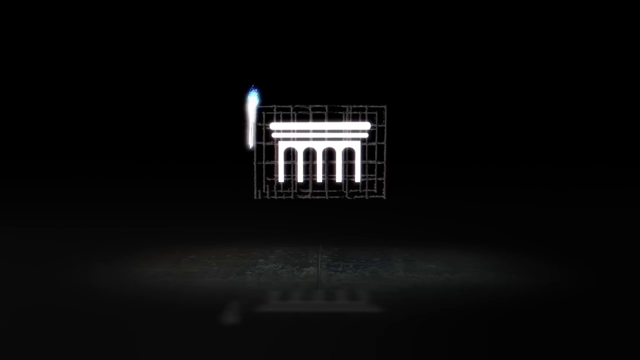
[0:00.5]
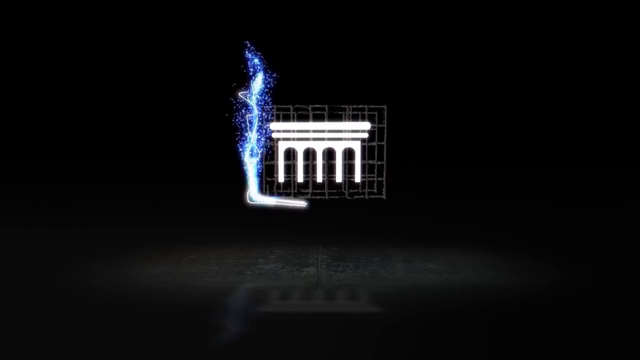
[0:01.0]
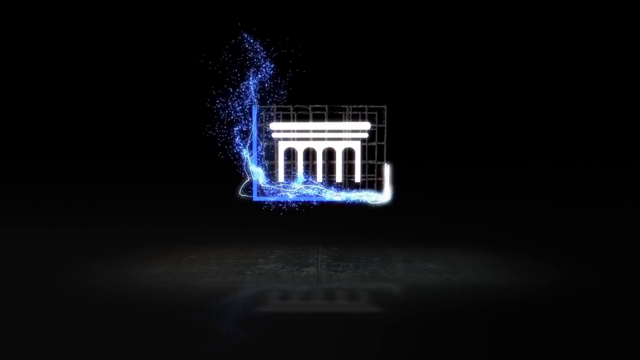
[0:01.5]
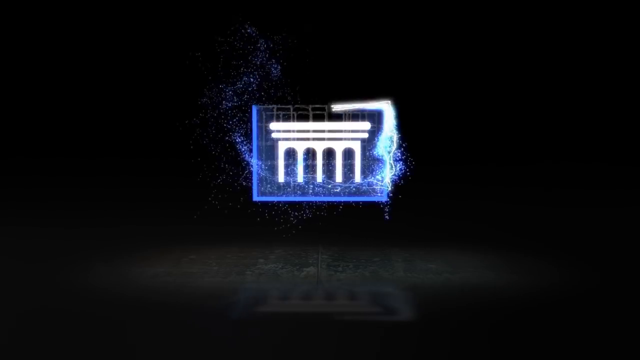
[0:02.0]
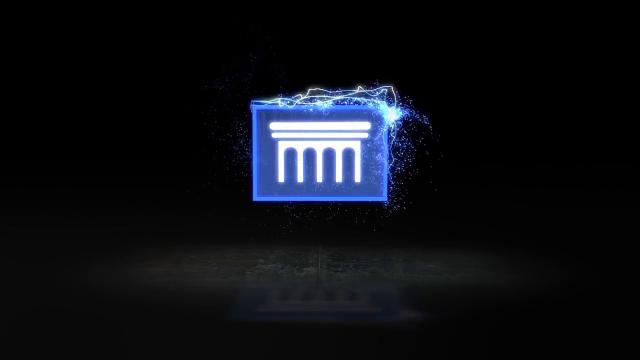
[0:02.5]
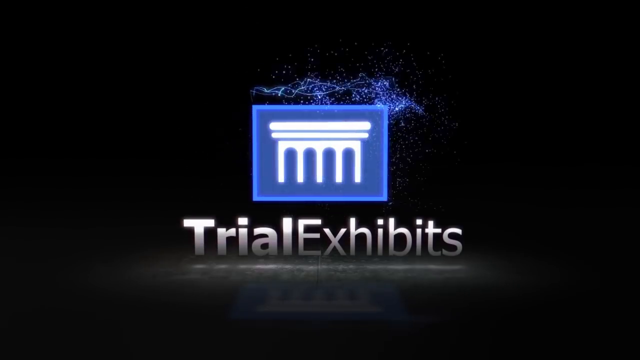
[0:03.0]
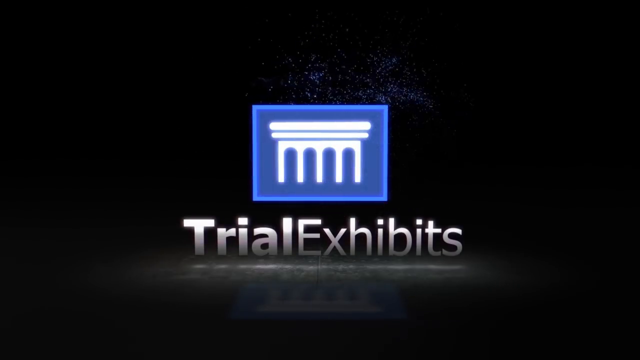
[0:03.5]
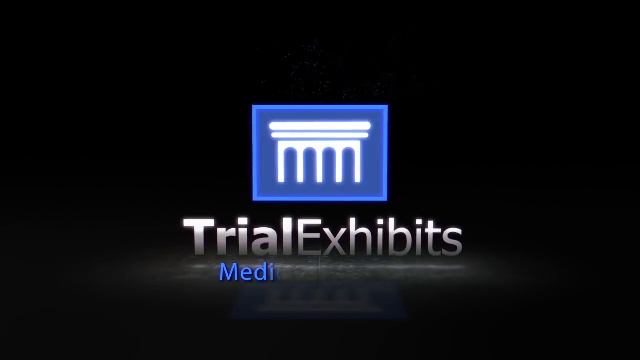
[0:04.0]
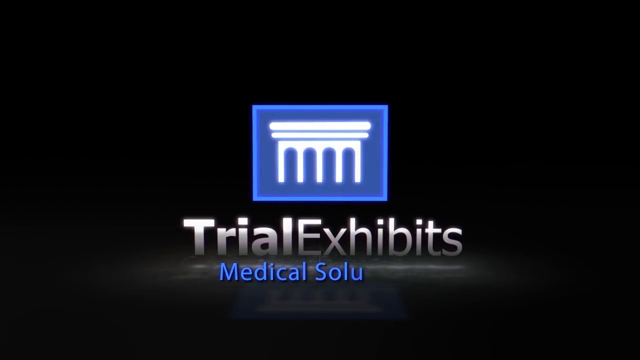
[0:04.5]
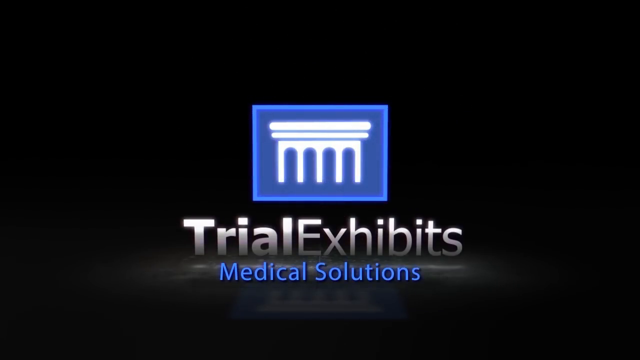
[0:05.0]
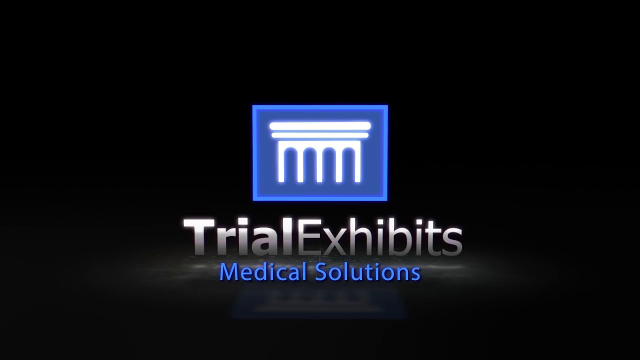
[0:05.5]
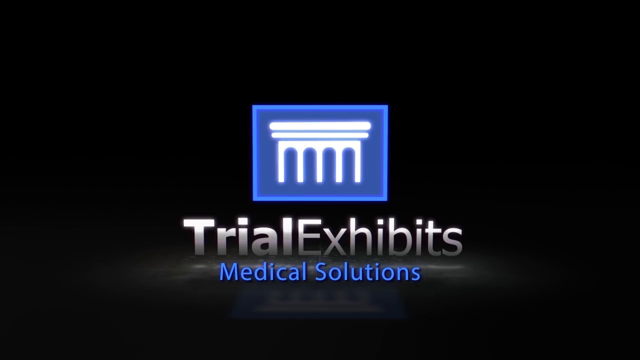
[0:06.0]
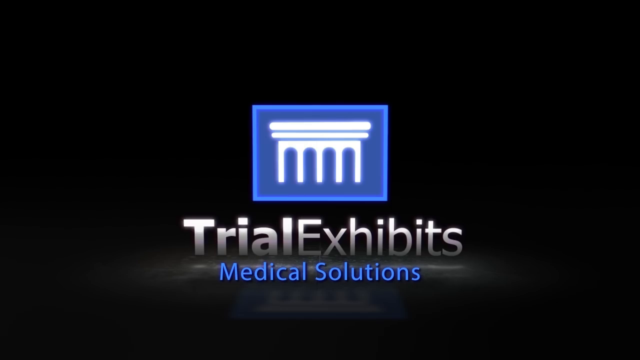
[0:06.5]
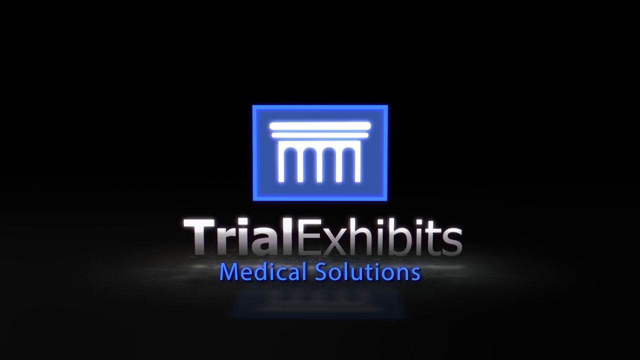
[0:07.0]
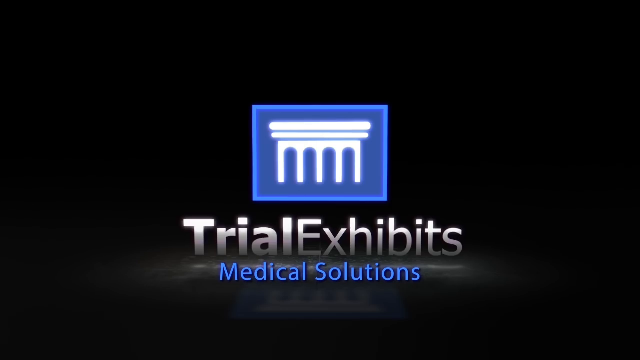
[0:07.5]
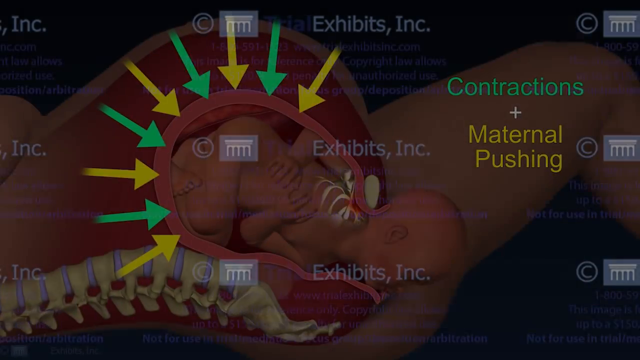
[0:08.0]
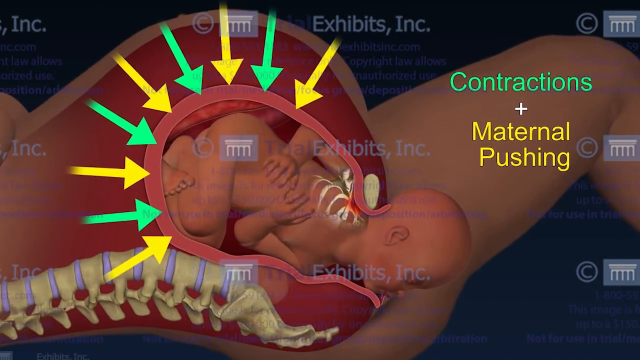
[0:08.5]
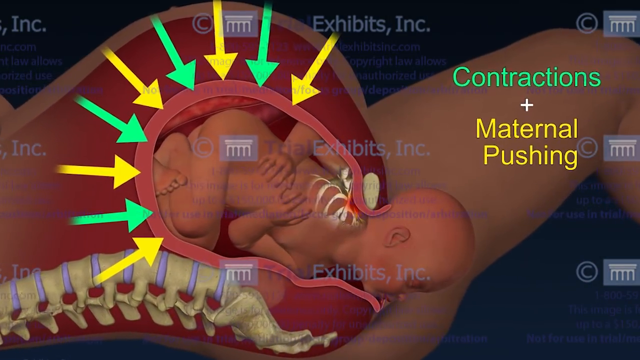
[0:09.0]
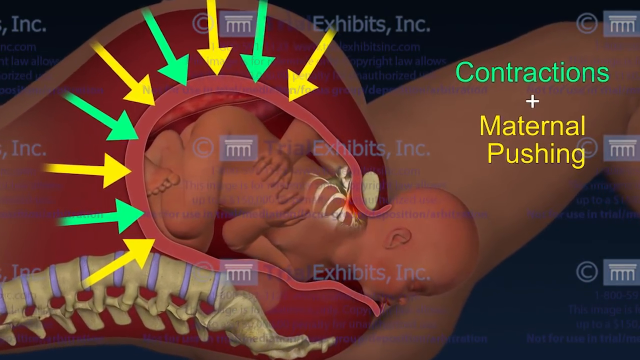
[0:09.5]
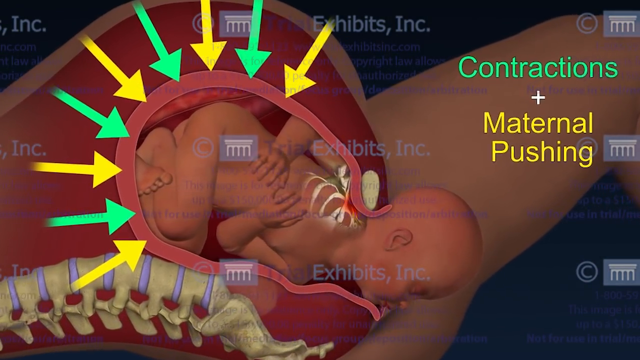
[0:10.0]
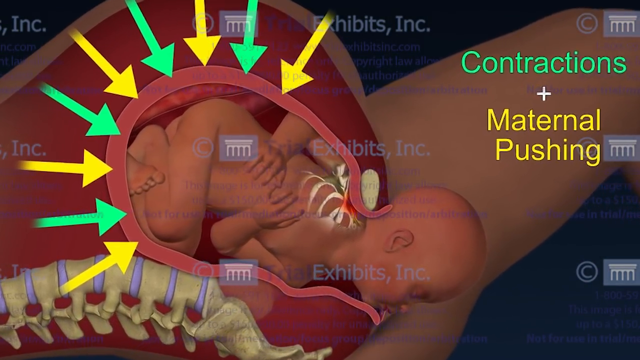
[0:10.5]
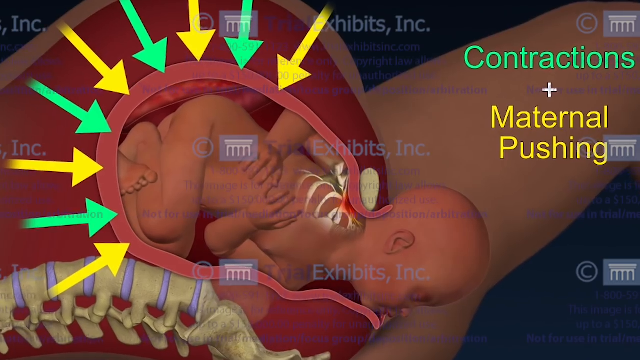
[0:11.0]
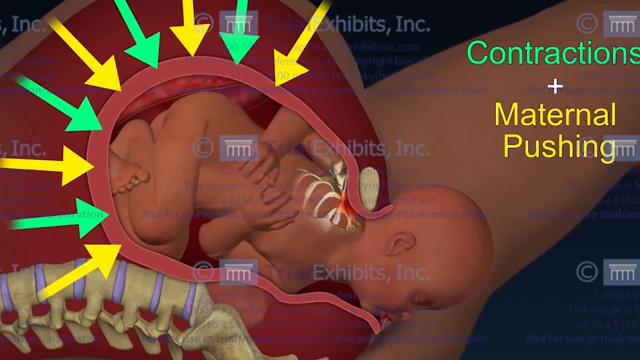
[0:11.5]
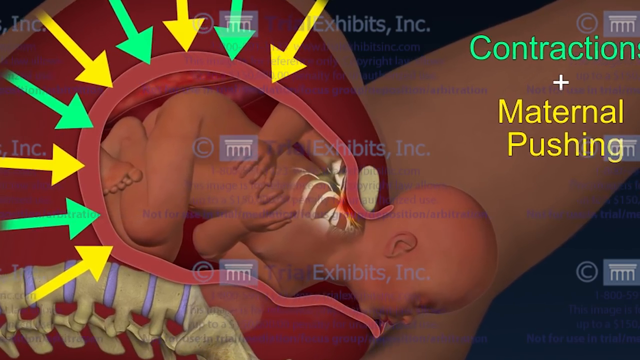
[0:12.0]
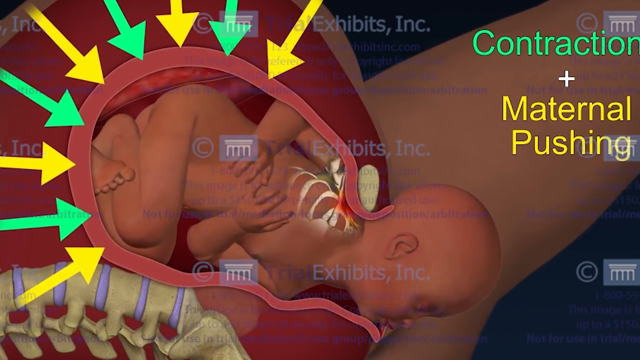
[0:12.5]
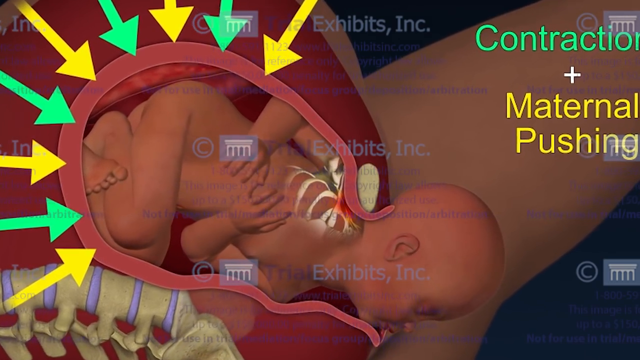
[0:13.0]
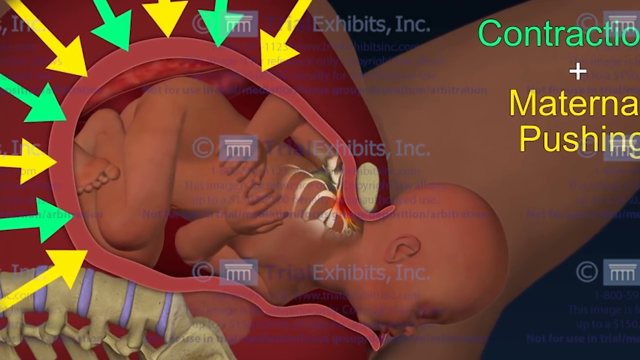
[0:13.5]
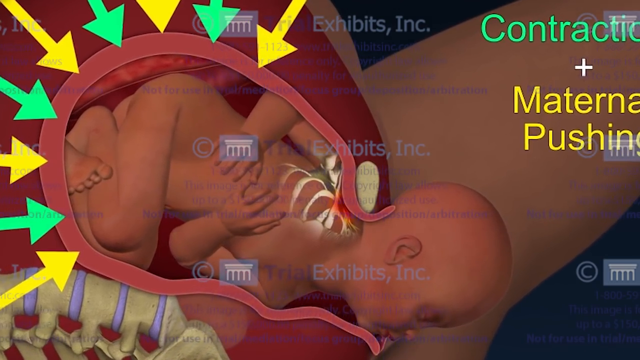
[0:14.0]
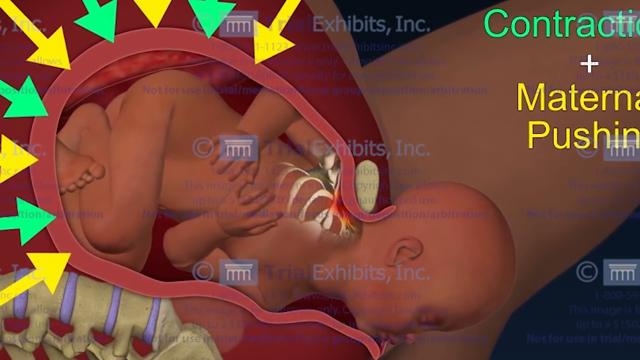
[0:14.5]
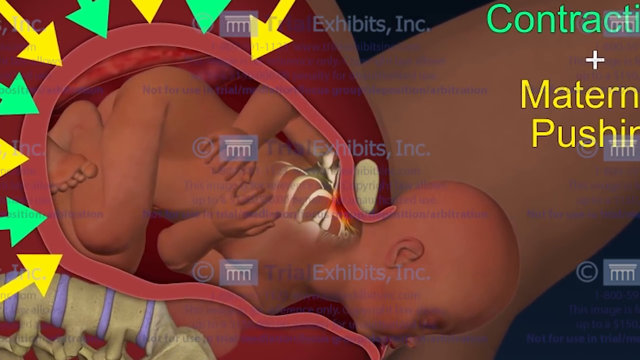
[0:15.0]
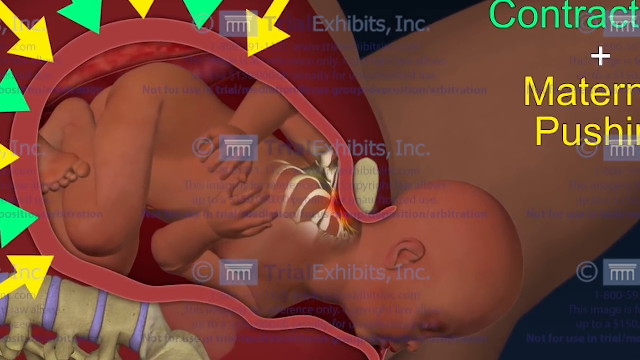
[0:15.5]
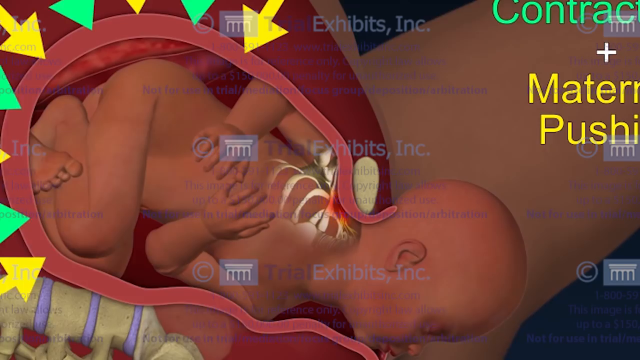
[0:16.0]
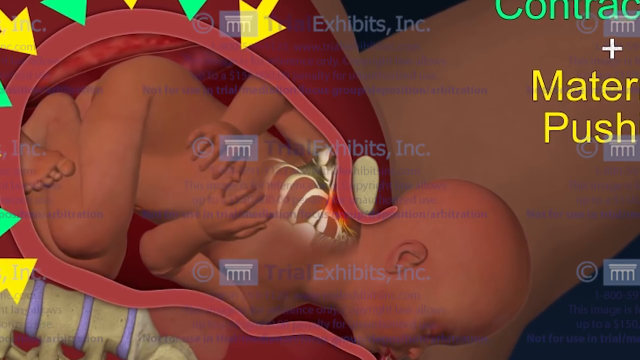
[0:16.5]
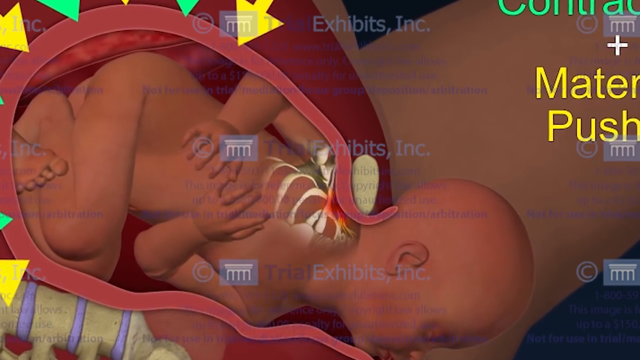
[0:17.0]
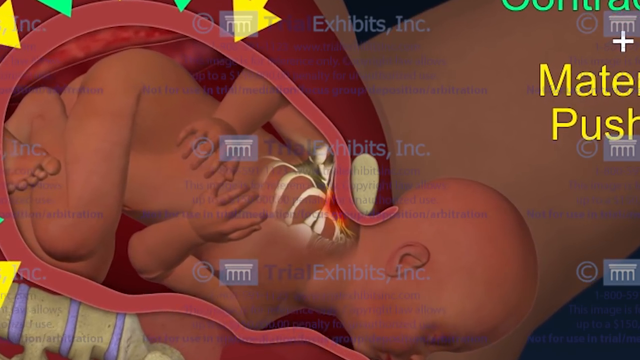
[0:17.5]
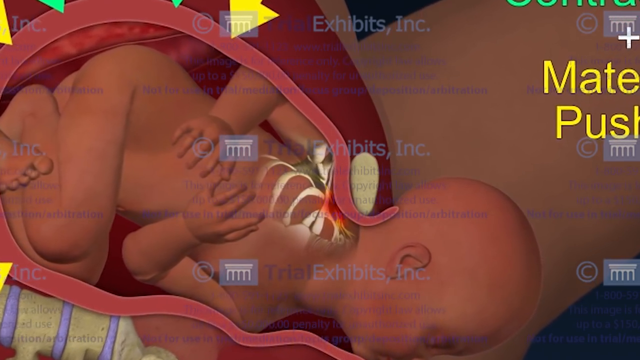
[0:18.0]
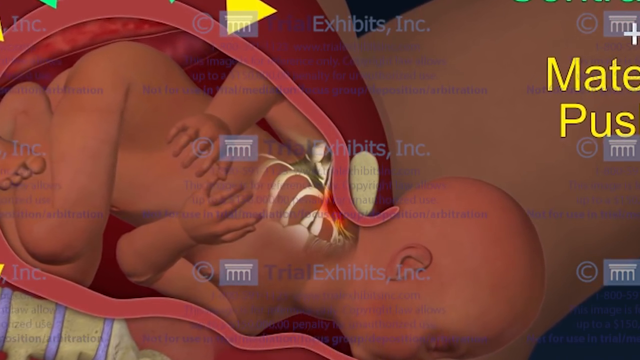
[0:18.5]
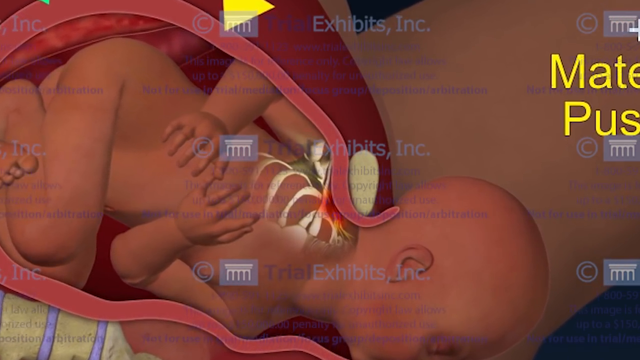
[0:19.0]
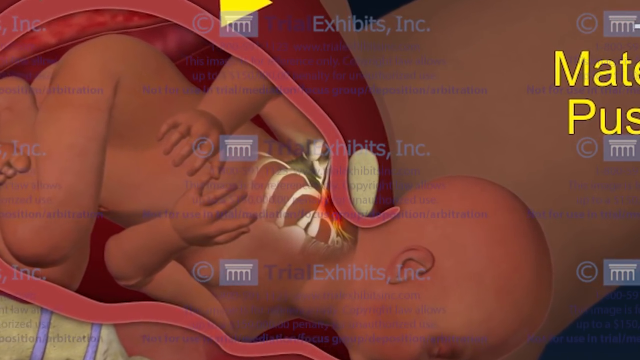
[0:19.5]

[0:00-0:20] The video opens on a simple image of what looks like a Congress-like building with white pillars. A fancy, almost laser-like blue effect with some splash, like water droplets, forms the left, bottom and right sides of a box around it. Underneath, white text reads "trial exhibits" as one word, and below that, smaller text about half the size reads "medical solutions" in blue. Next comes an animated diagram of a baby inside the mother, shown on its side, with alternating yellow and green arrows all around the buttocks and leg region. Watermark text covers the image, apparently like a wallpaper or mark, and there is a copyright mark. To the right, text reads "contractions plus maternal pushing." The view keeps zooming in a little, and part of the ribs on the baby's back is highlighted, about four ribs as it zooms in. The baby's arms are bent at roughly a 90-degree angle for the most part, and its hands are kind of resting over its abdomen.